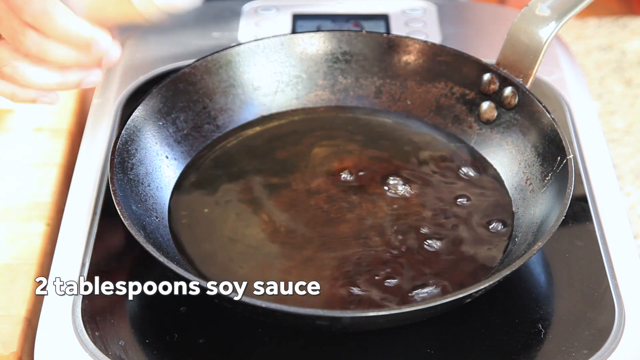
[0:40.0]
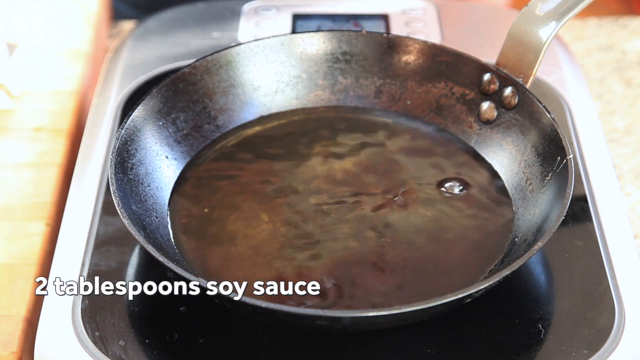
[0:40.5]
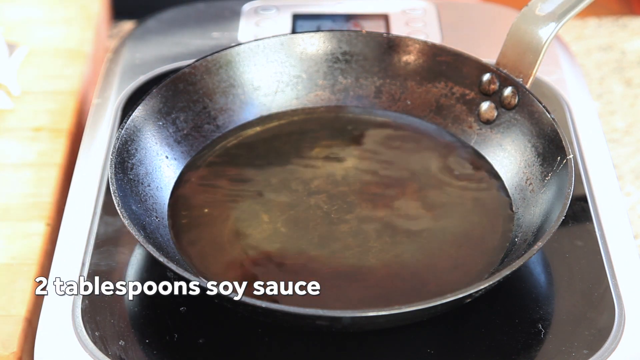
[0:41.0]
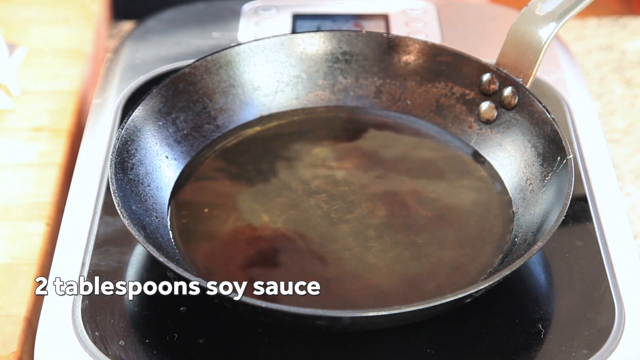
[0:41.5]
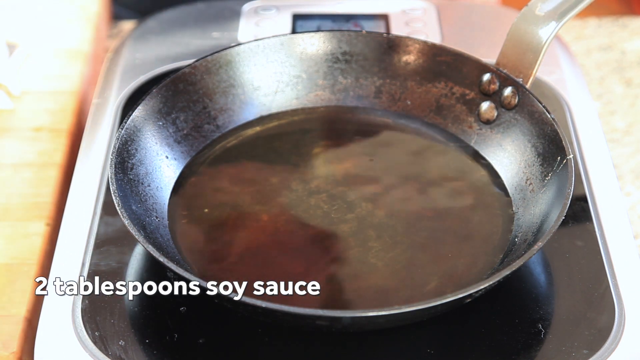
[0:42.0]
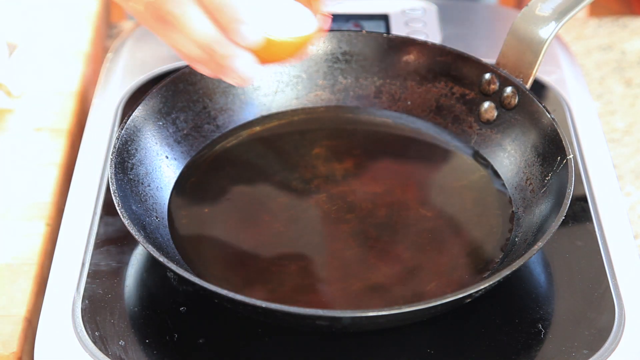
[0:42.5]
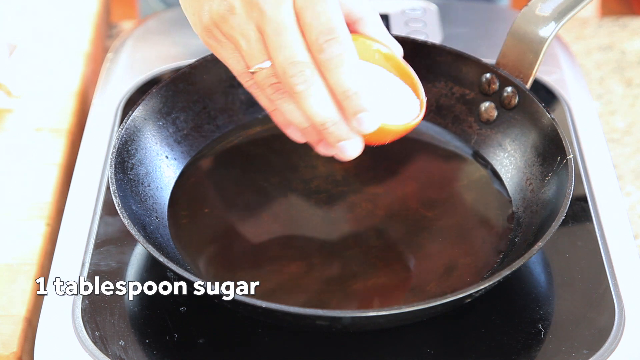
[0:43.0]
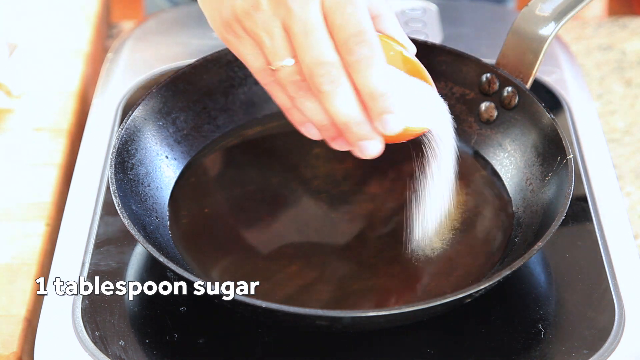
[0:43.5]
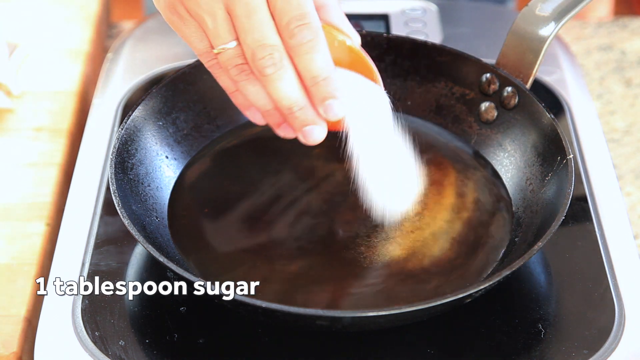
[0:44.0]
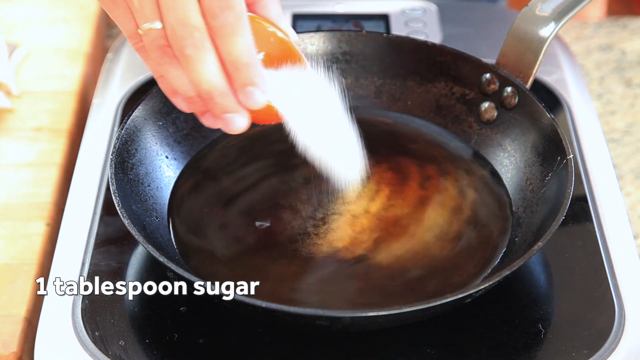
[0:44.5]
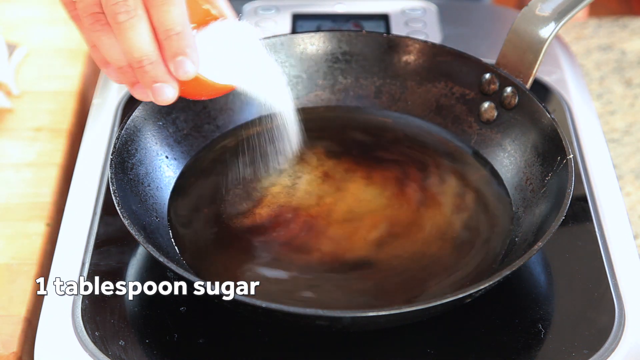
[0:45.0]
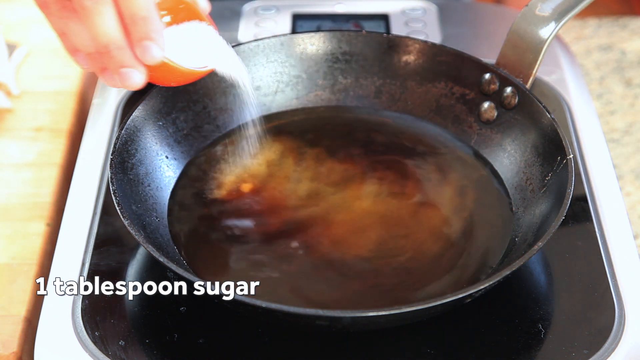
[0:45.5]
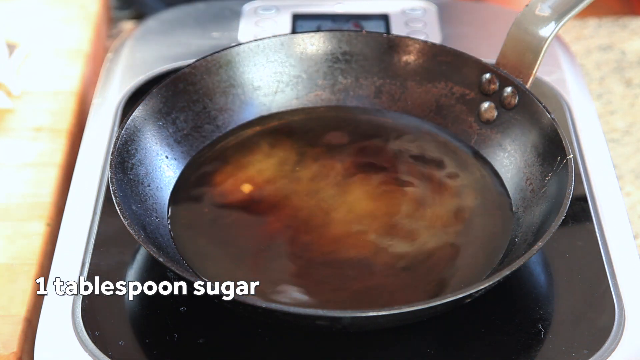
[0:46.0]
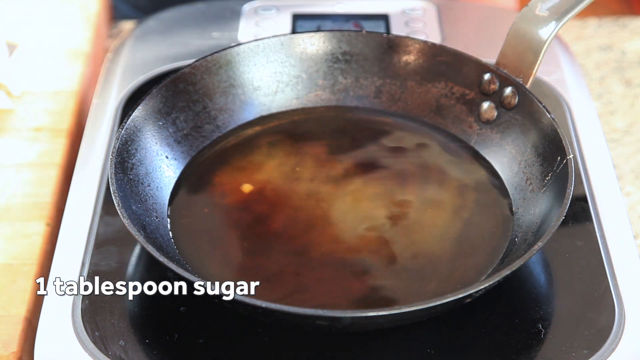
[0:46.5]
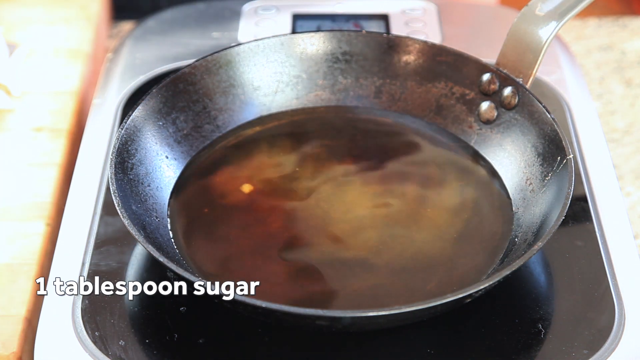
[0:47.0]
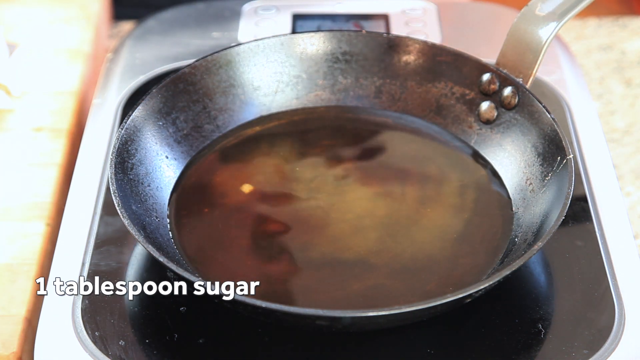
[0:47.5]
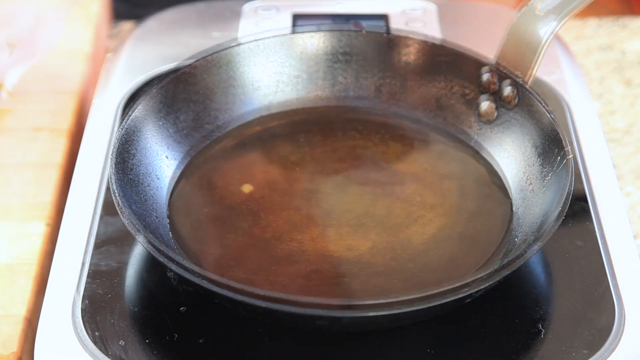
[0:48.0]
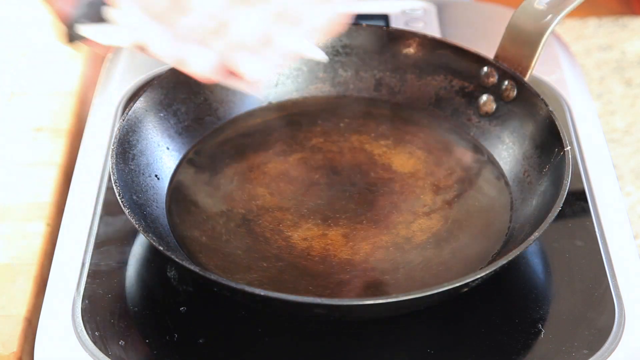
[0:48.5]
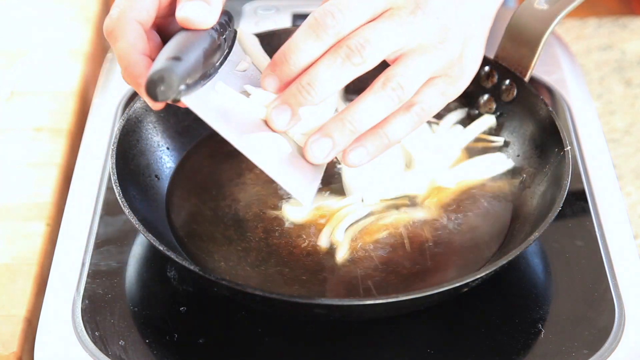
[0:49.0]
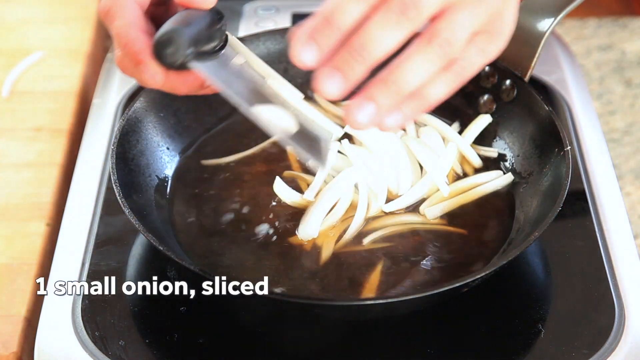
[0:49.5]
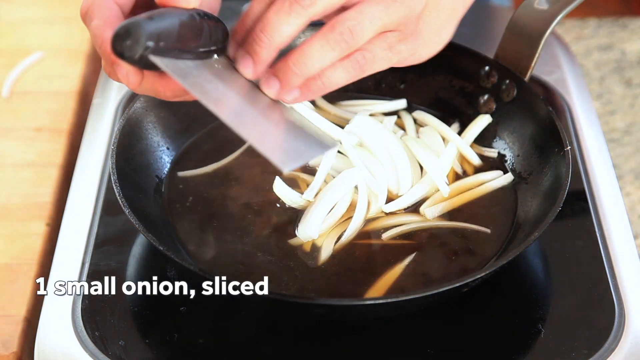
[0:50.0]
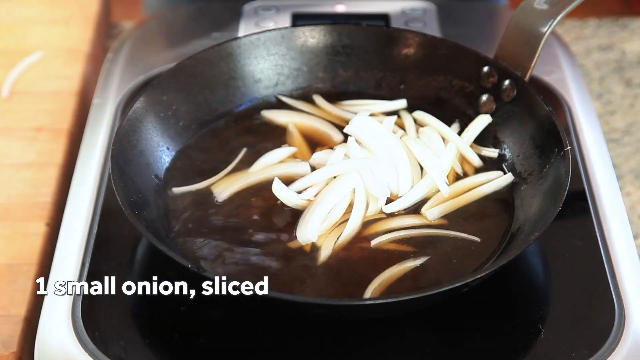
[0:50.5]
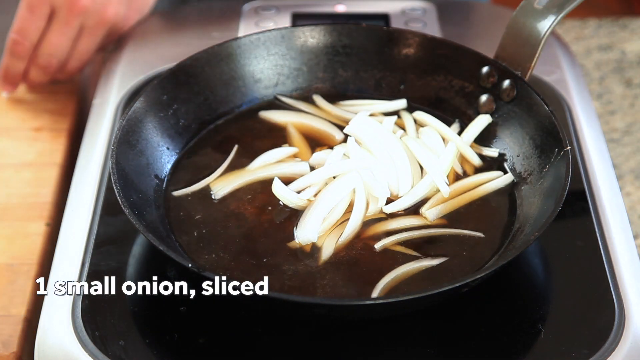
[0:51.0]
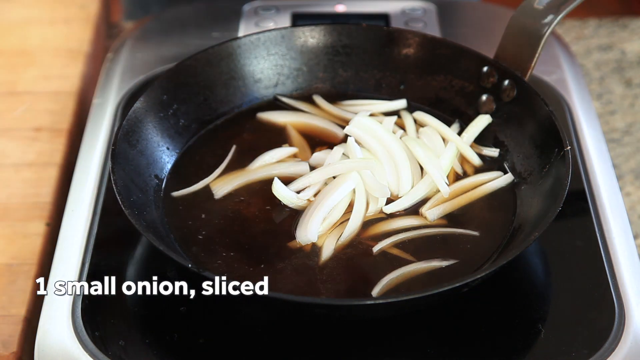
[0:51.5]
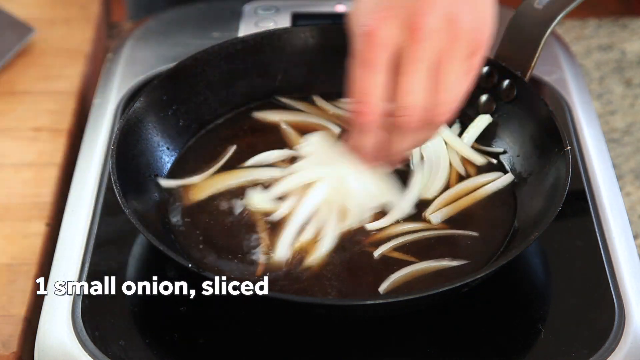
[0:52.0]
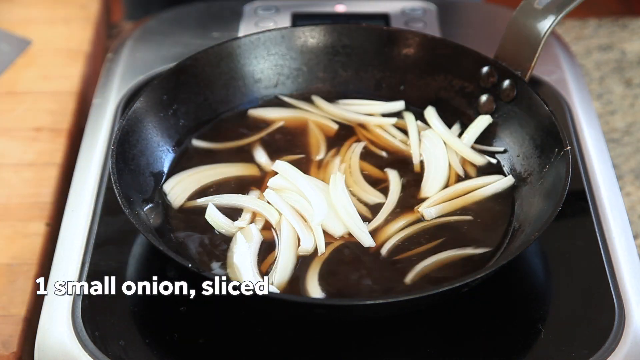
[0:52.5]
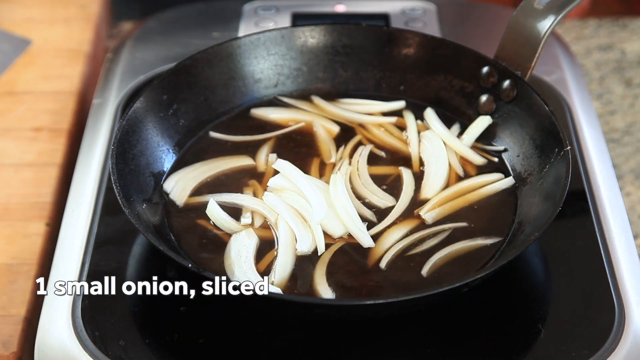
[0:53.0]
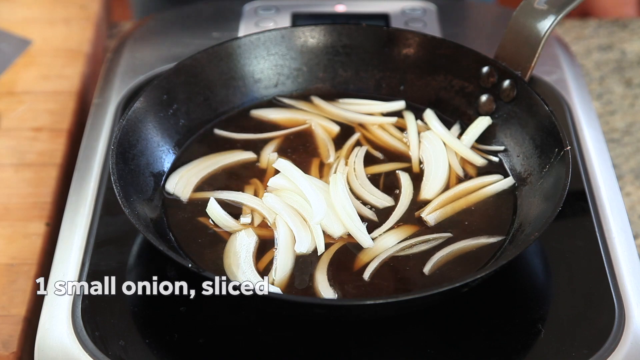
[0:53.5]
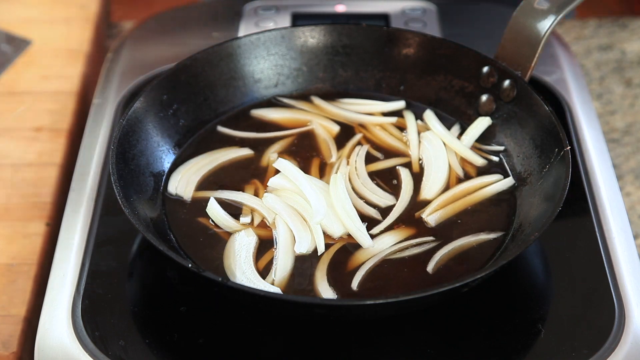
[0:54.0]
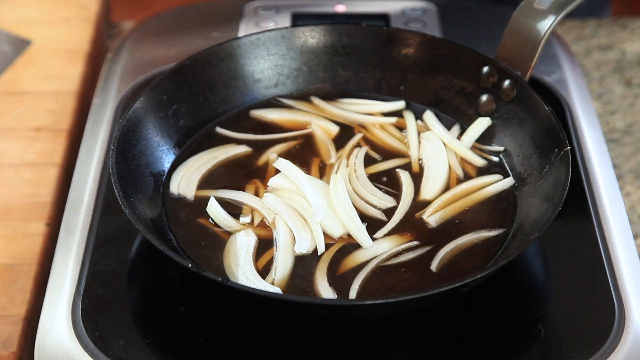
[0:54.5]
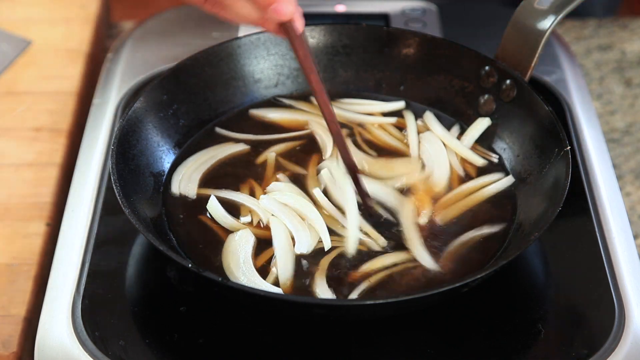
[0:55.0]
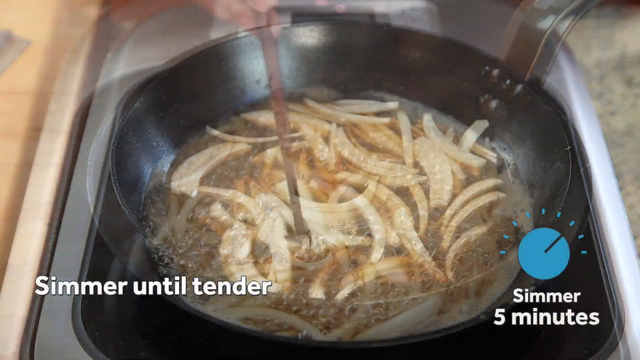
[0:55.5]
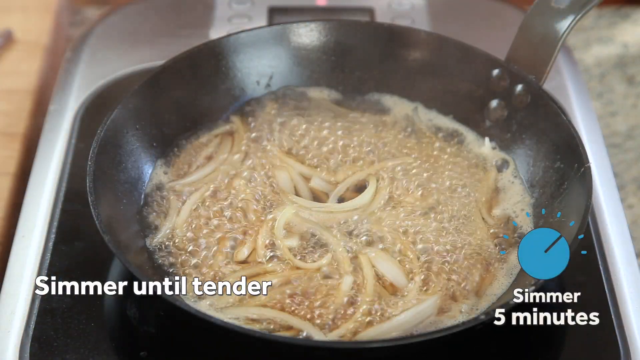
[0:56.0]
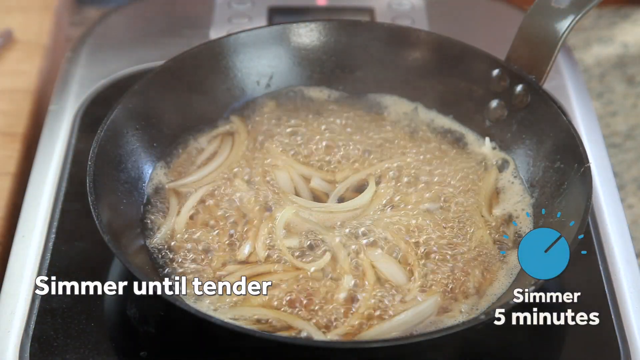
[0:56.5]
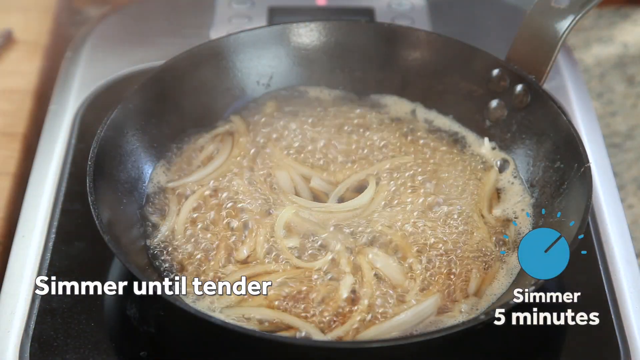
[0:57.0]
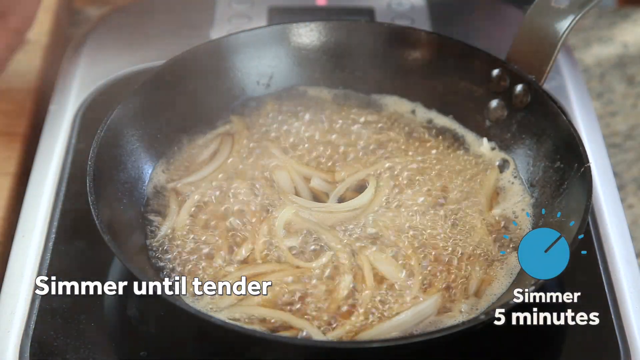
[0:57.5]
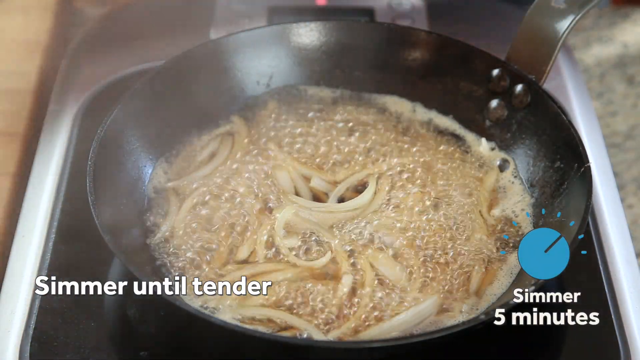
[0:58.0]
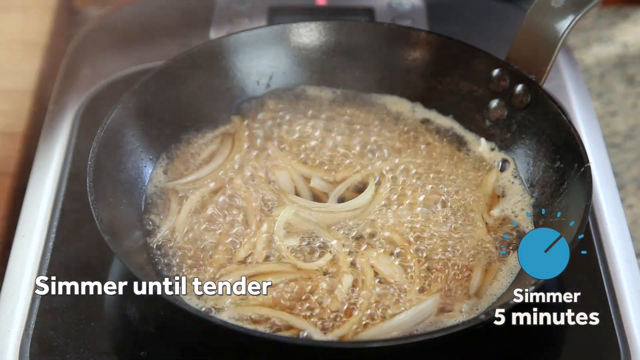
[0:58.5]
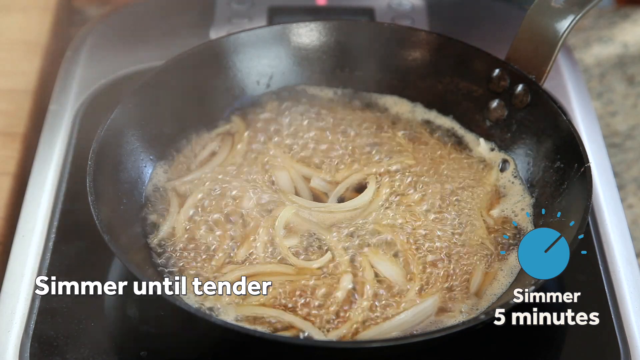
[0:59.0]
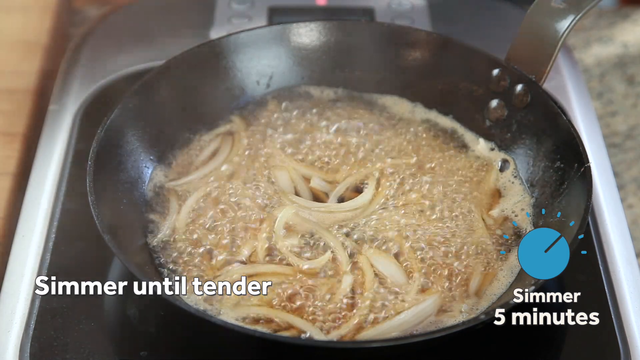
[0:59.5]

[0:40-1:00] A close-up shows the pan after some of the wet ingredients have been poured in. It looks like it is not on a stove but on a hot plate, potentially something used in Japanese kitchens. The pan is fairly deep and fairly full with the dashi broth, soy sauce and sake. The text reads "two tablespoons of soy sauce", then "one tablespoon sugar" as sugar is poured into the pan, then "one small onion slice" as sliced onion is put into the pan and stirred with brown chopsticks. Then the text reads "simmer until tender" and everything in the pan is boiling. Each time an ingredient goes in, white text in the bottom left-hand corner of the screen states what is being added. In the last shot, with the text "simmer five minutes", a little blue circle with a piece cut out of it appears in the right-hand corner, like a little dial, possibly showing a clock for five minutes.